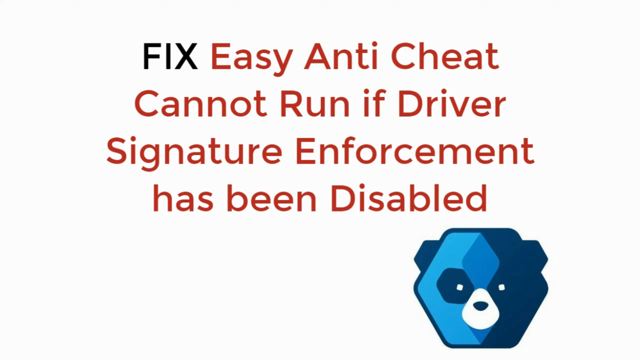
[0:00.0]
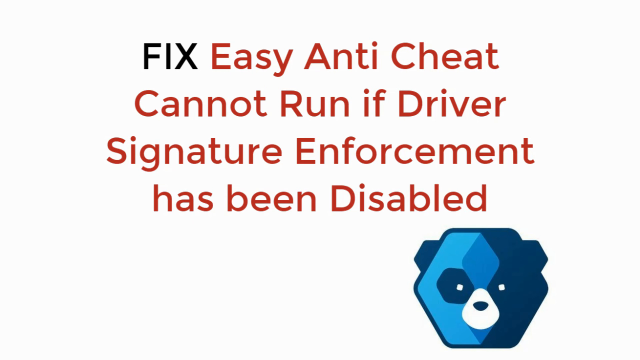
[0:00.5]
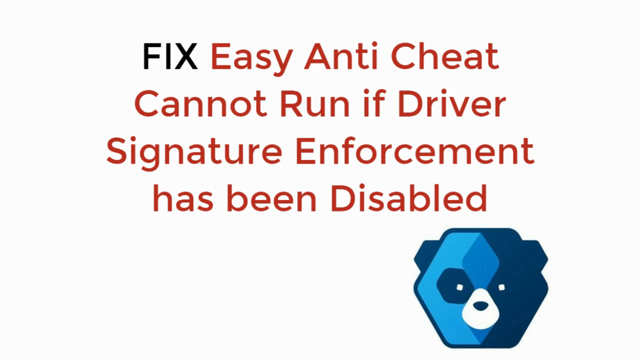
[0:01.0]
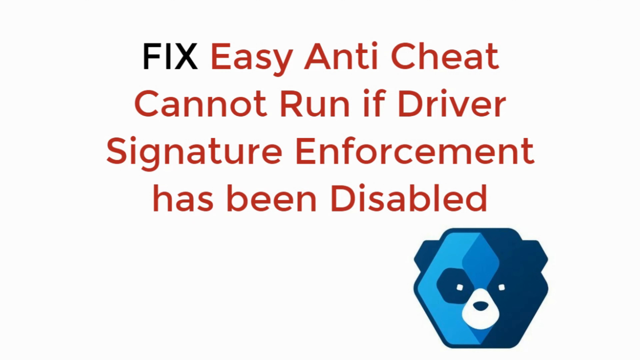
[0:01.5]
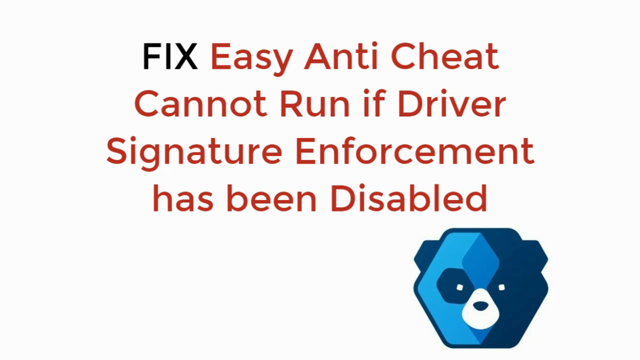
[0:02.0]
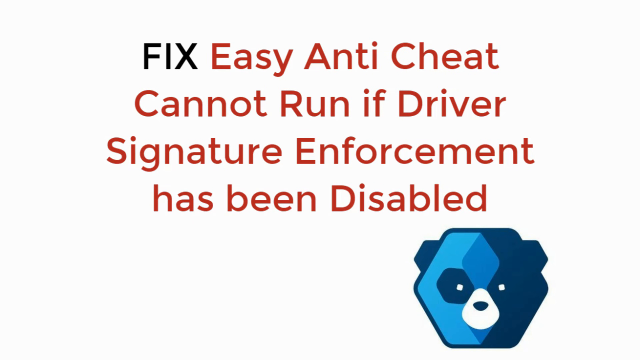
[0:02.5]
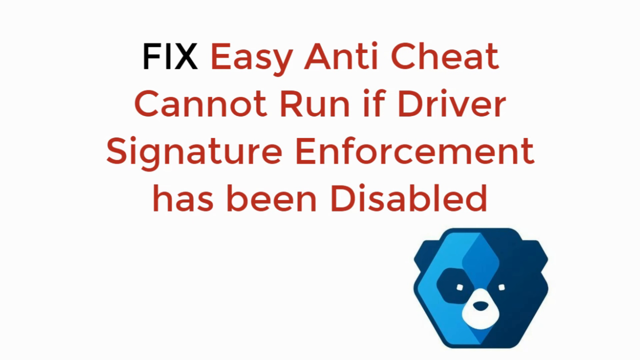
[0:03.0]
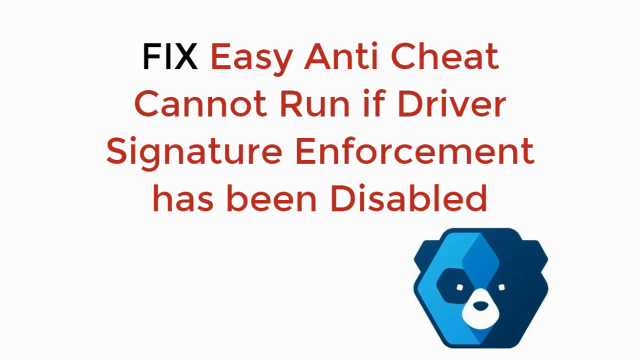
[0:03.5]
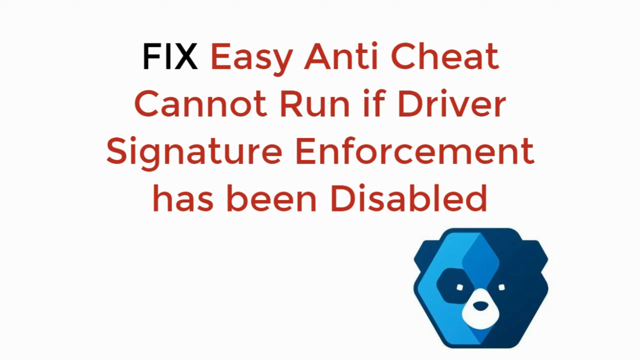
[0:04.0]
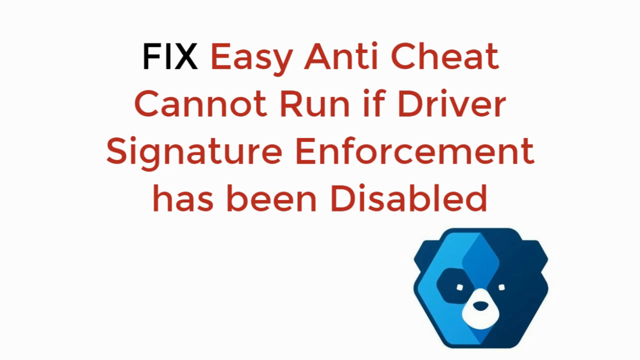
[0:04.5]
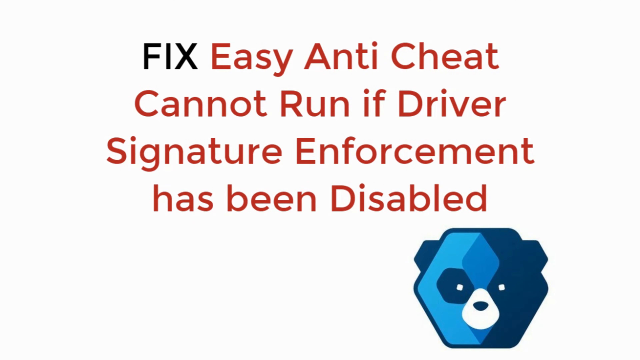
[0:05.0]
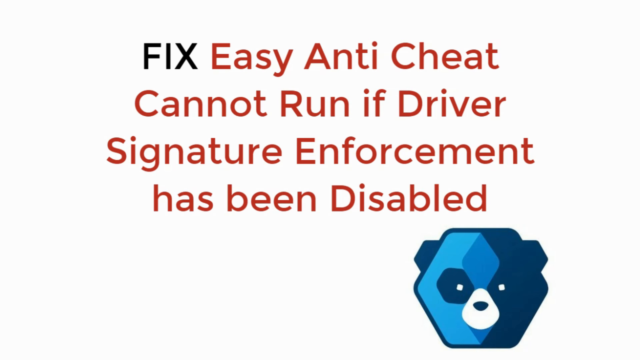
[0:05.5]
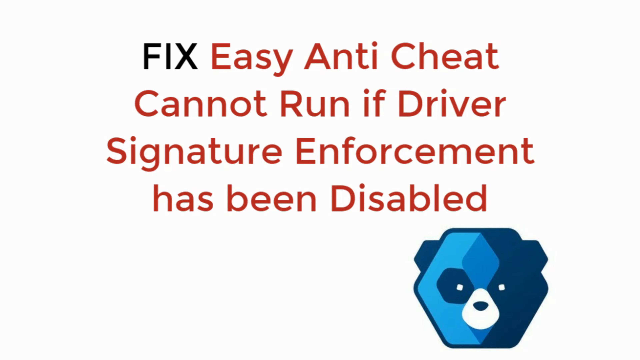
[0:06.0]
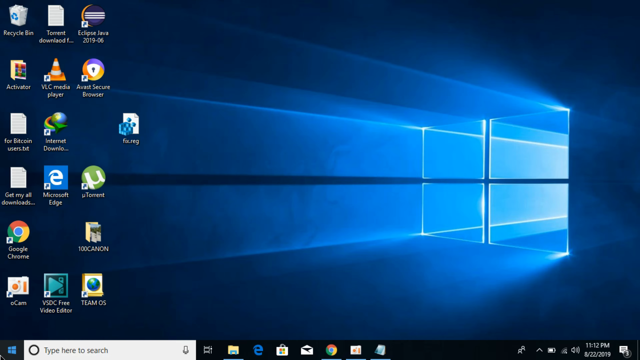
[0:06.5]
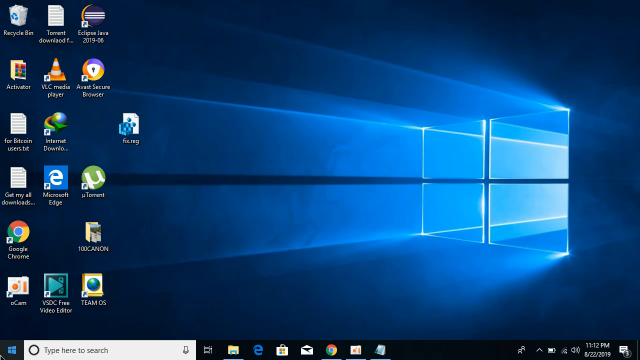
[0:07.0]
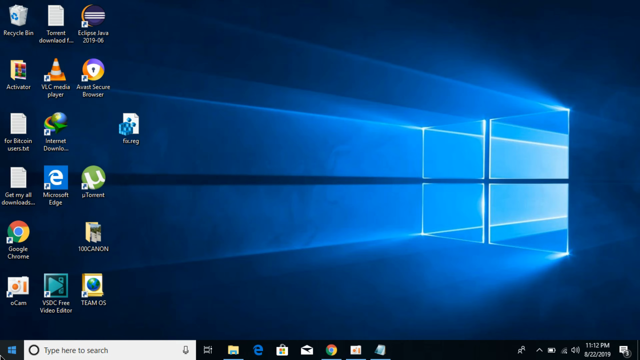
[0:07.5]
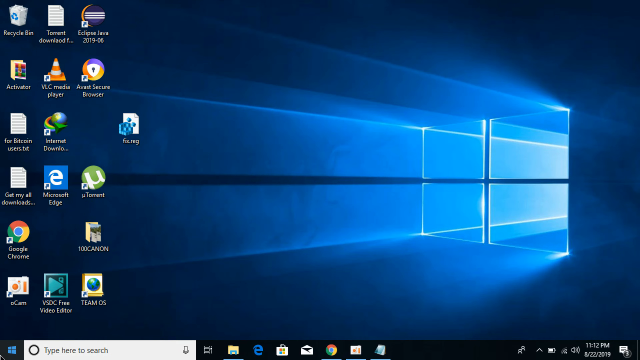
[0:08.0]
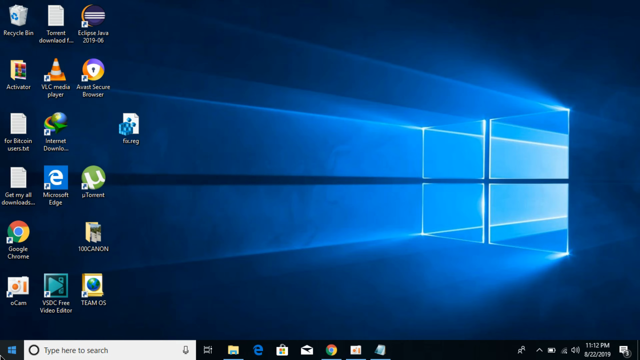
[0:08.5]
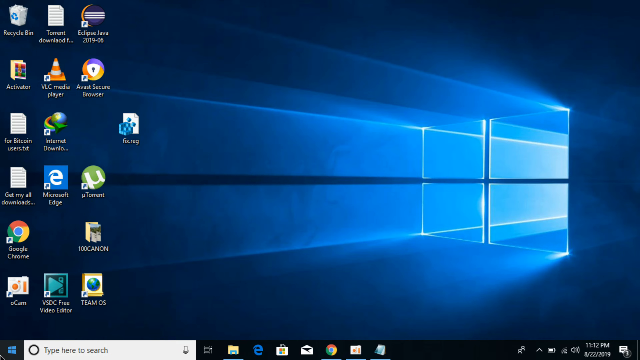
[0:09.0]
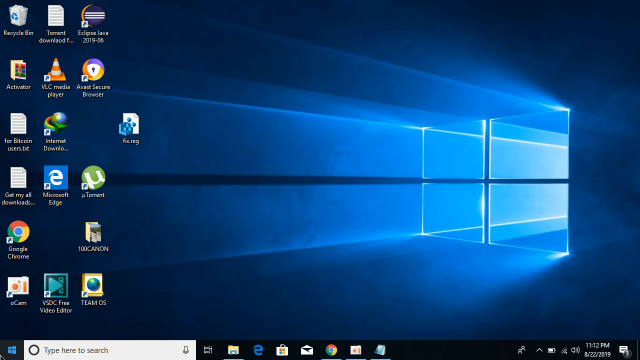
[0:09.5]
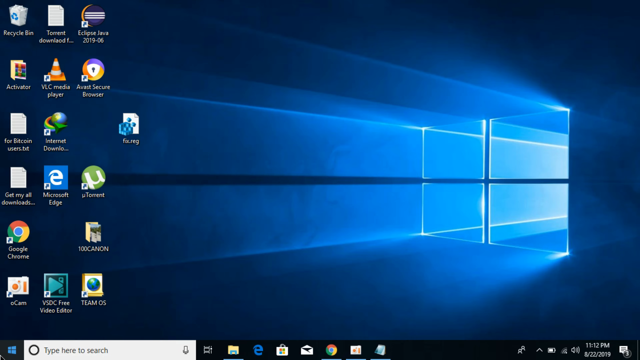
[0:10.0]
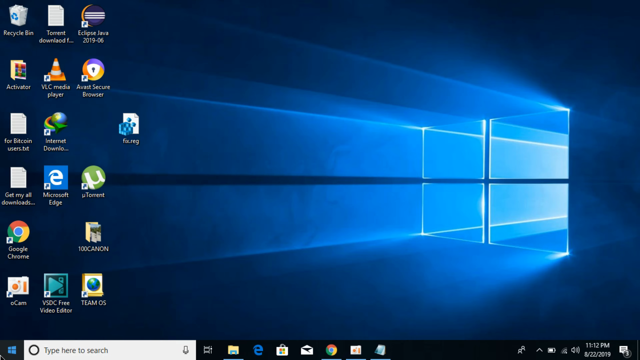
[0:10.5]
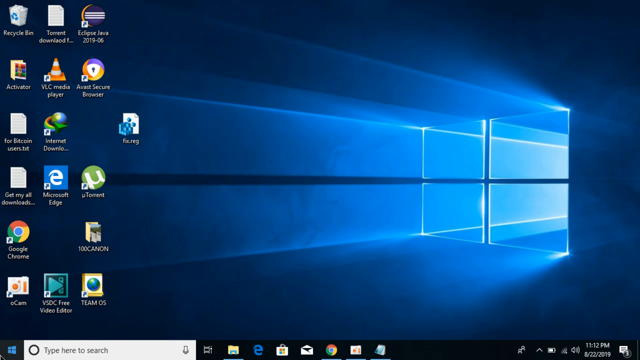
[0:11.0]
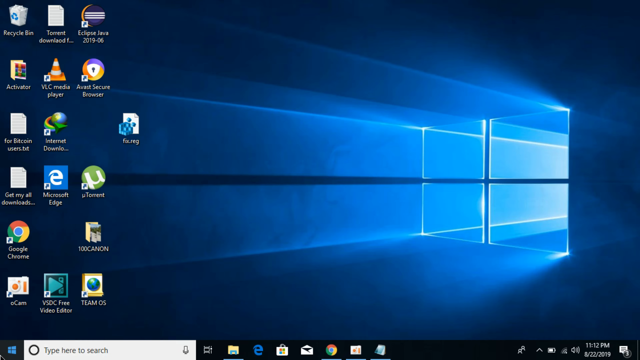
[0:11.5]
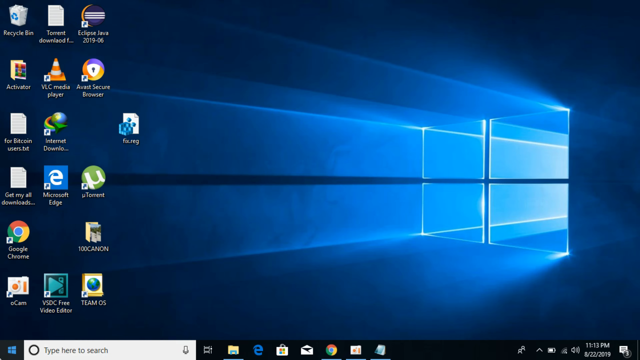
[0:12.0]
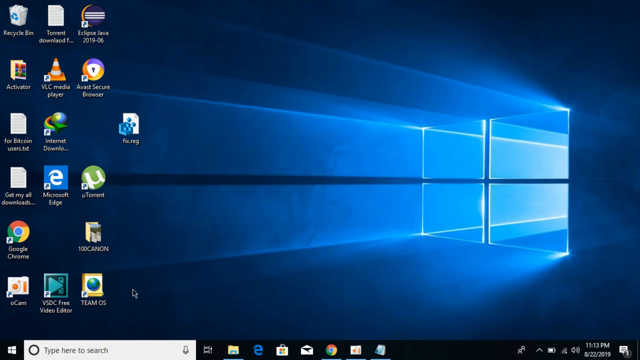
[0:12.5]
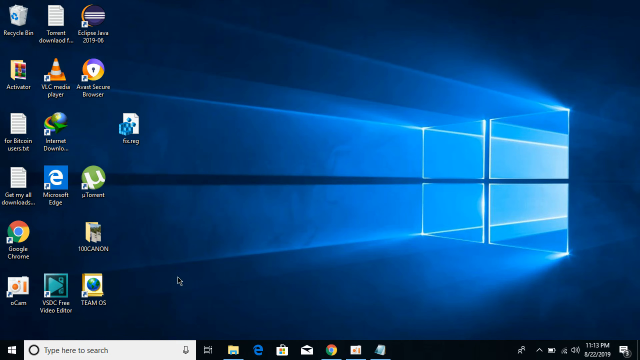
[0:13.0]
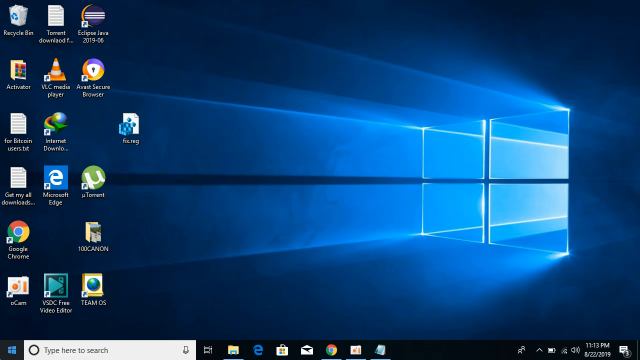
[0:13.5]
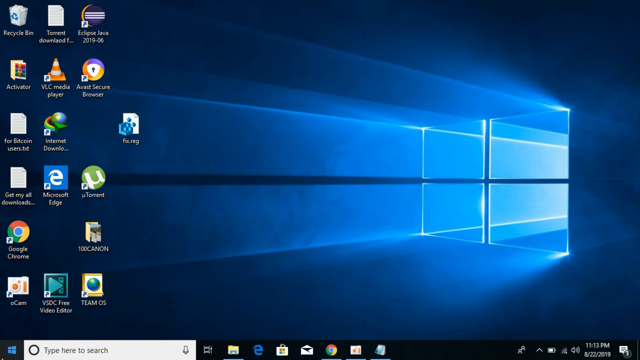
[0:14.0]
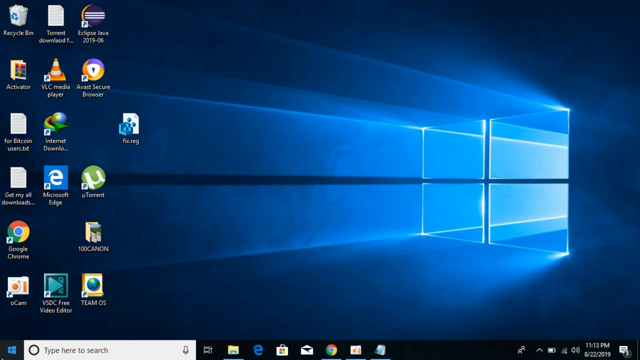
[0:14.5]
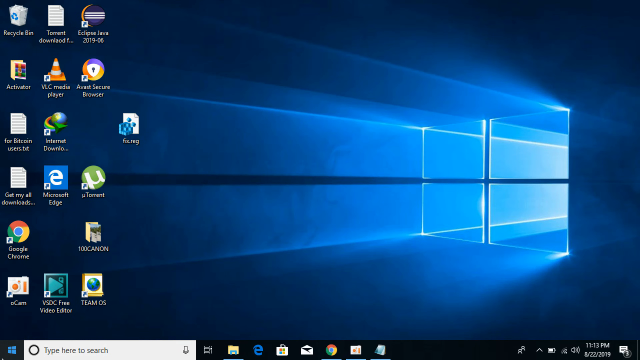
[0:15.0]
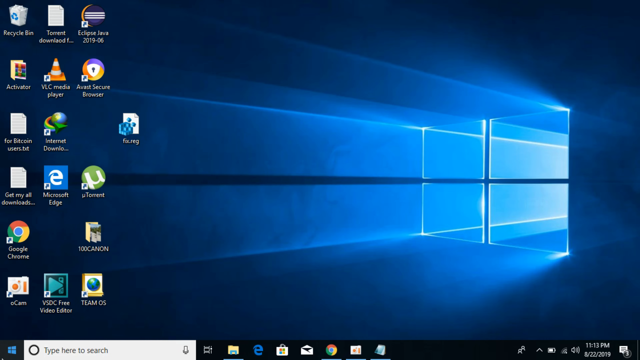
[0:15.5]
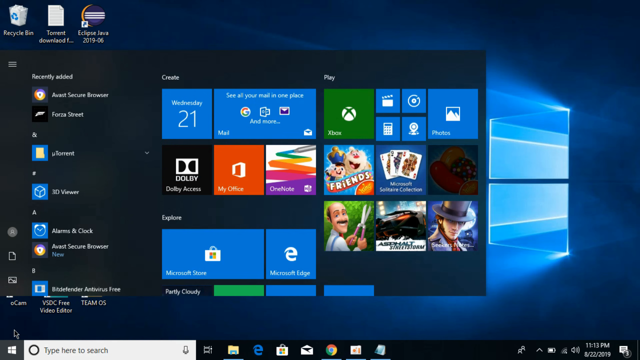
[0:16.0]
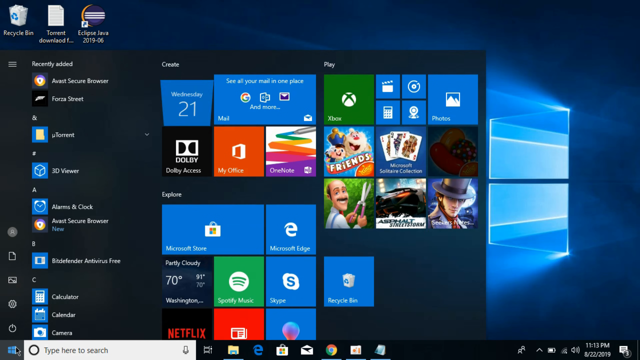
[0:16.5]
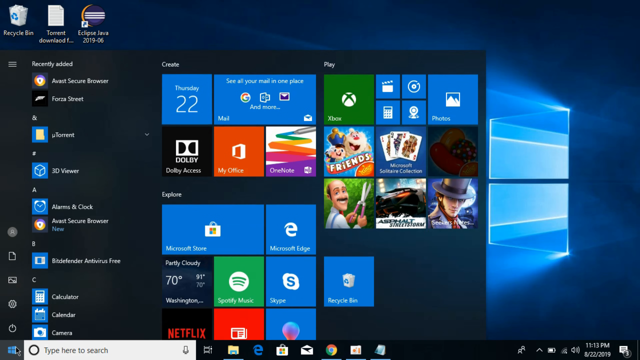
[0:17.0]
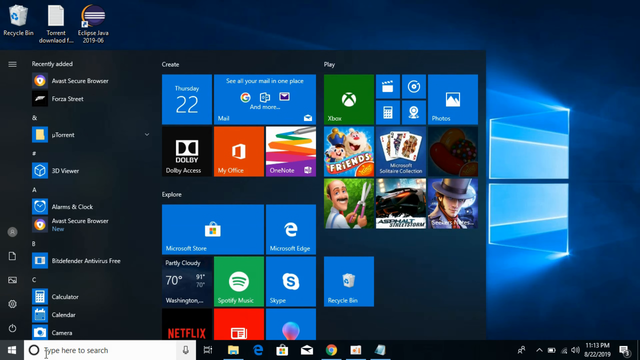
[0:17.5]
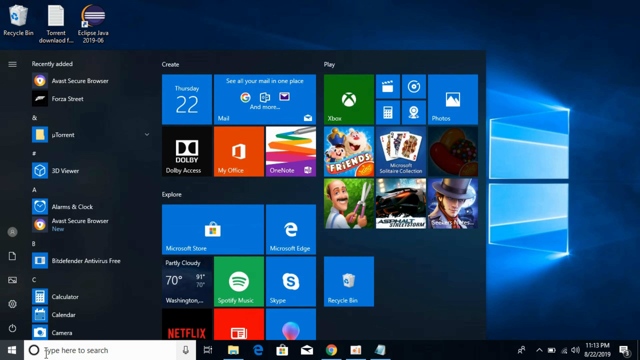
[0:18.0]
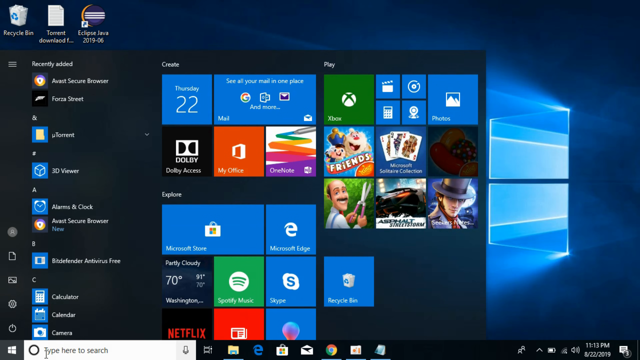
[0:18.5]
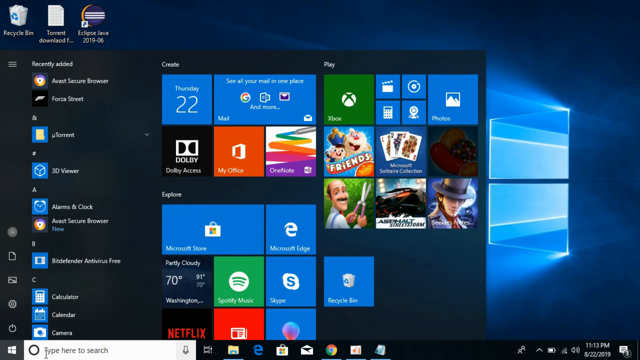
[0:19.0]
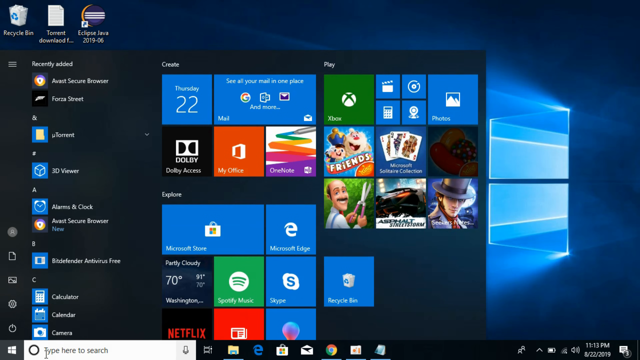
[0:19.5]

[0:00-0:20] The video opens on a white screen with black and red text that reads "fix easy anti-cheat cannot run if driver signature enforcement has been disabled." In the lower right corner is an illustration of a bear's face made out of a blue hexagon, in three different shades of blue, with white eyes and a black nose. This goes away, revealing a Windows desktop with the Windows logo on the wallpaper and a scattering of icons on the left side of the screen. The cursor moves over the different icons, highlighting them without clicking any. It then clicks the Windows Start menu, which brings up the Start menu along with several widgets, including a calendar widget.